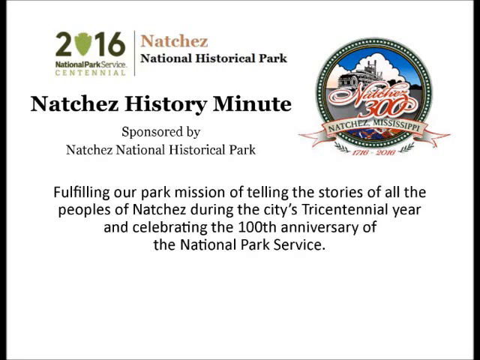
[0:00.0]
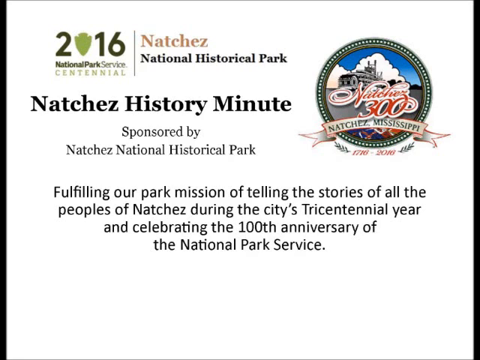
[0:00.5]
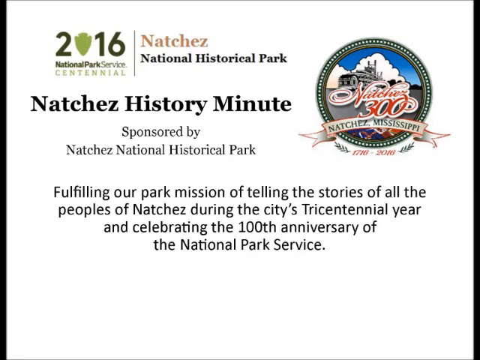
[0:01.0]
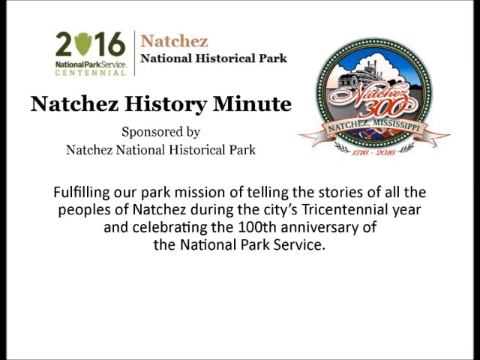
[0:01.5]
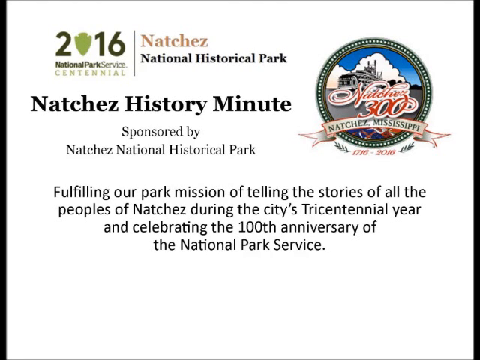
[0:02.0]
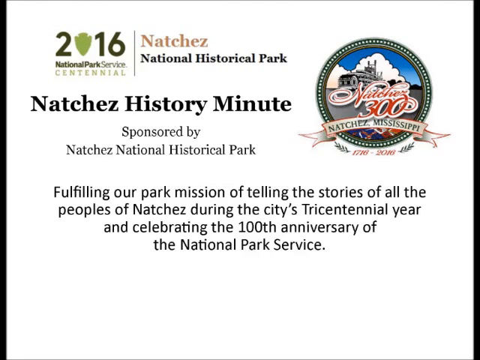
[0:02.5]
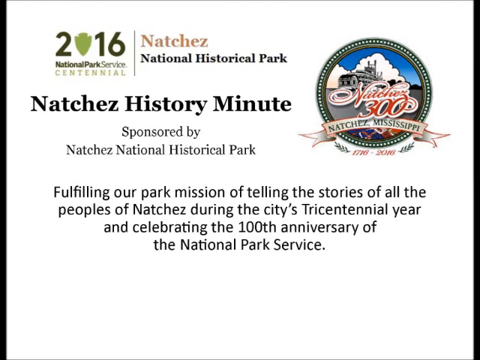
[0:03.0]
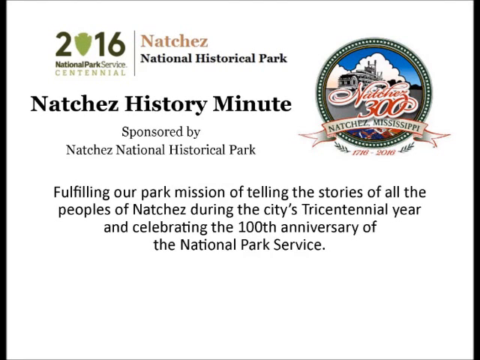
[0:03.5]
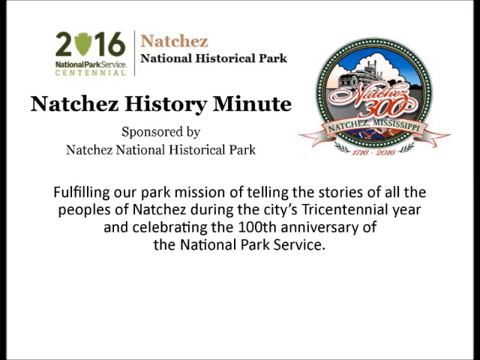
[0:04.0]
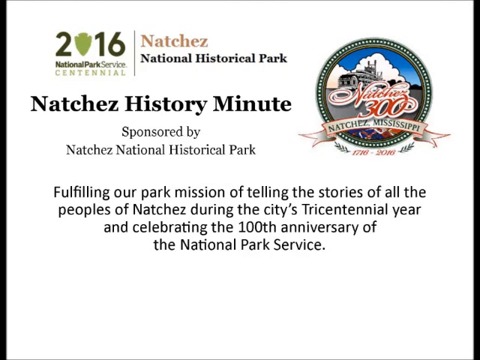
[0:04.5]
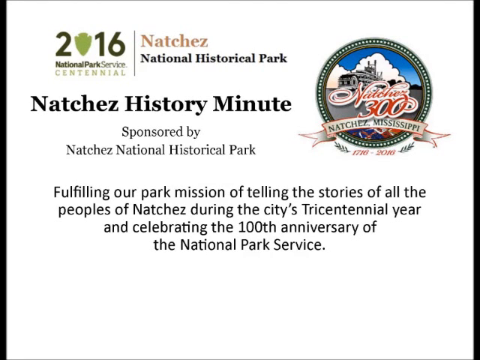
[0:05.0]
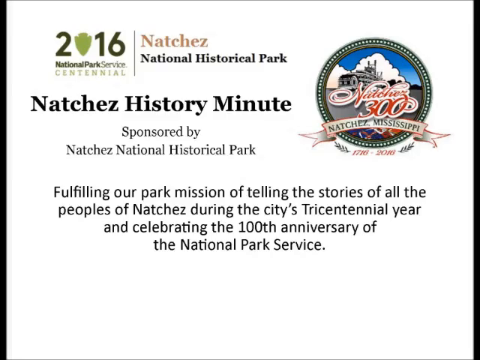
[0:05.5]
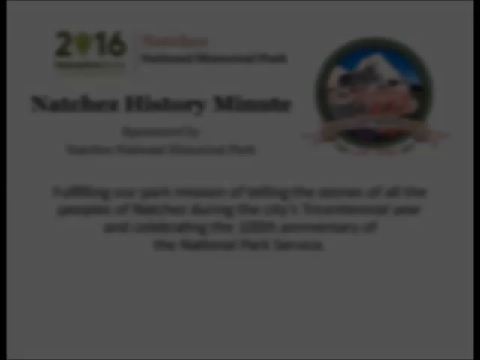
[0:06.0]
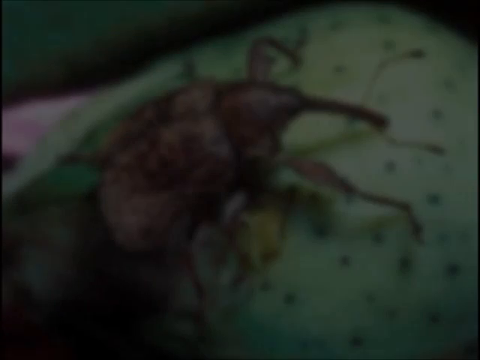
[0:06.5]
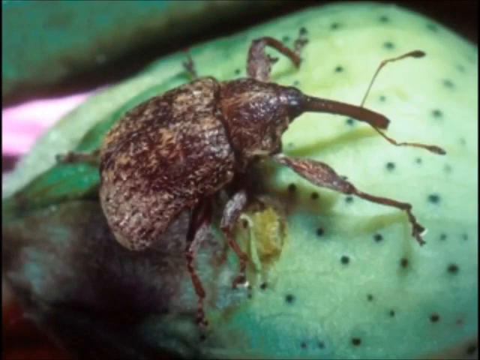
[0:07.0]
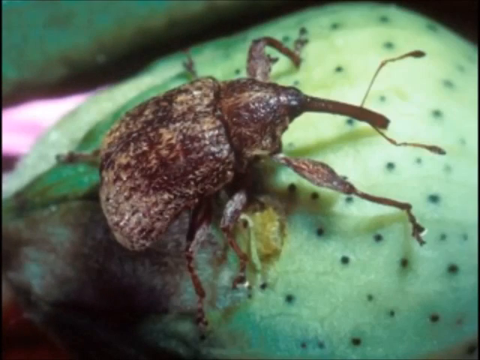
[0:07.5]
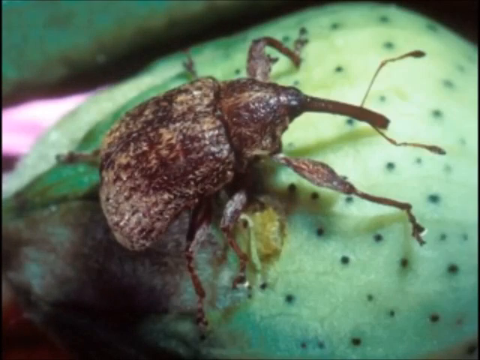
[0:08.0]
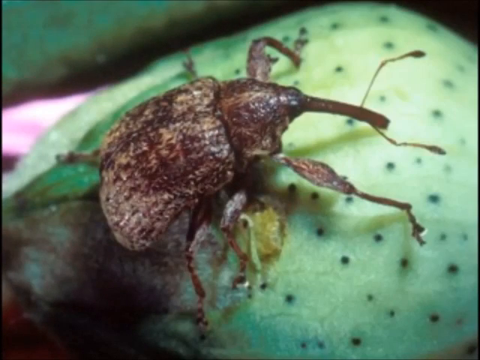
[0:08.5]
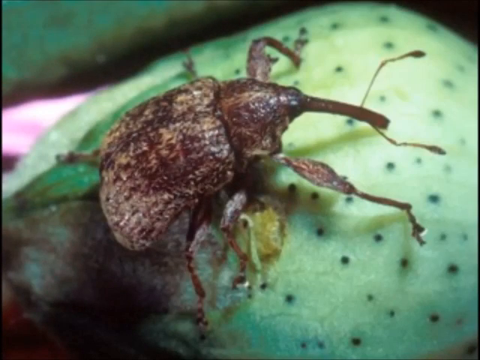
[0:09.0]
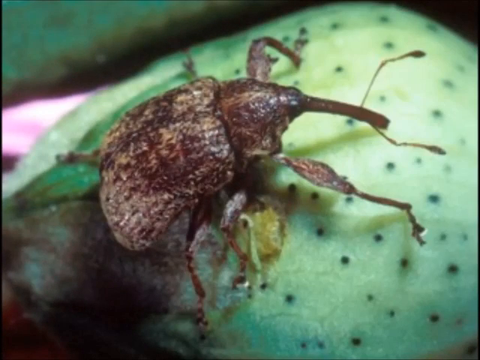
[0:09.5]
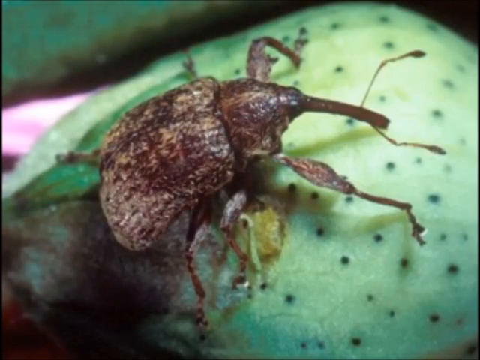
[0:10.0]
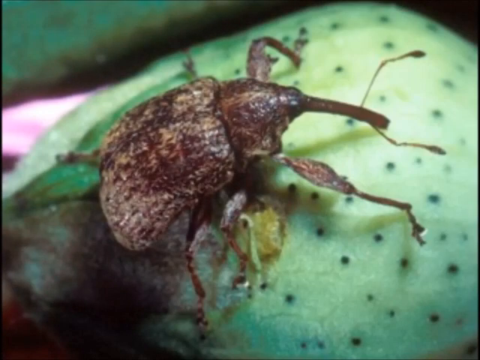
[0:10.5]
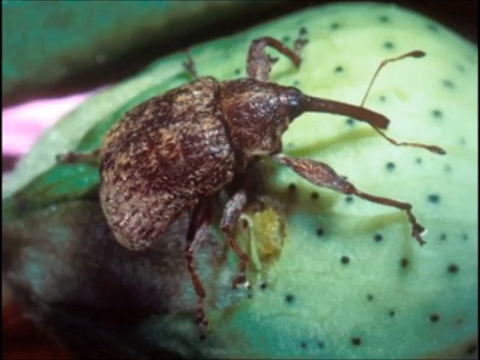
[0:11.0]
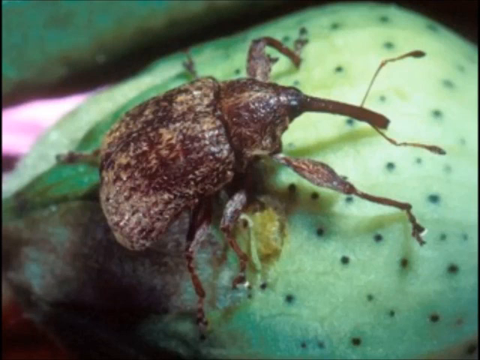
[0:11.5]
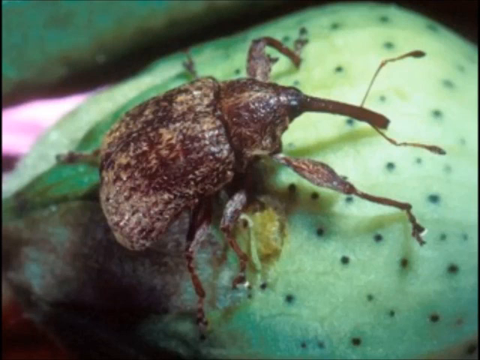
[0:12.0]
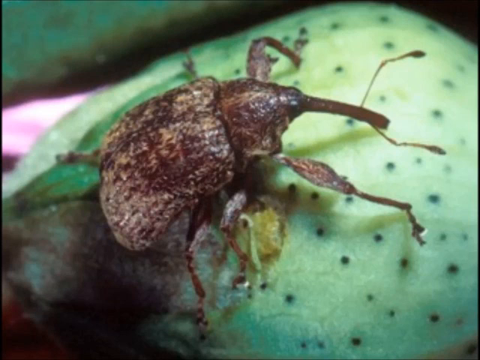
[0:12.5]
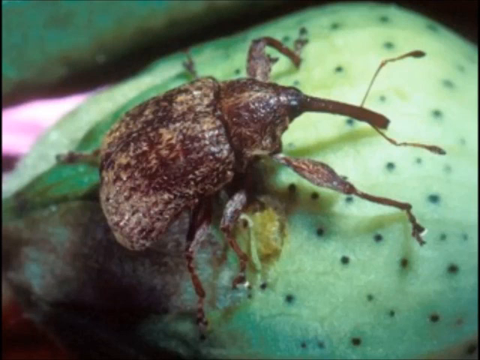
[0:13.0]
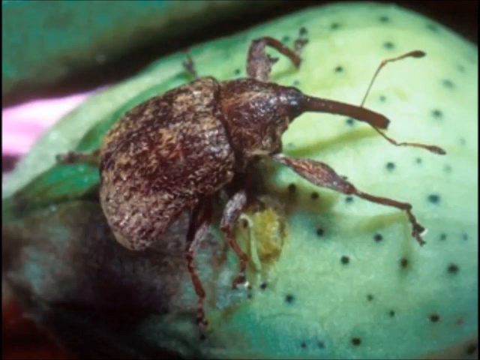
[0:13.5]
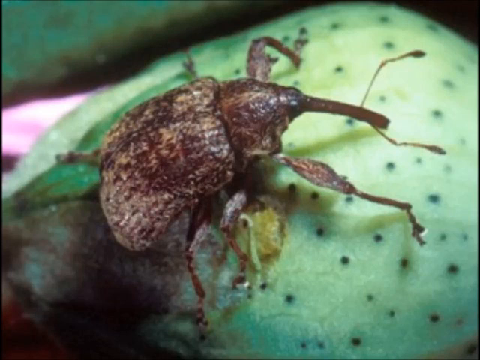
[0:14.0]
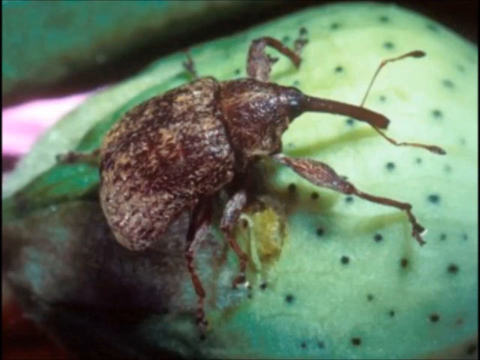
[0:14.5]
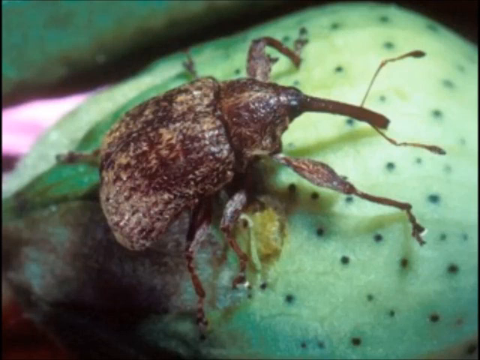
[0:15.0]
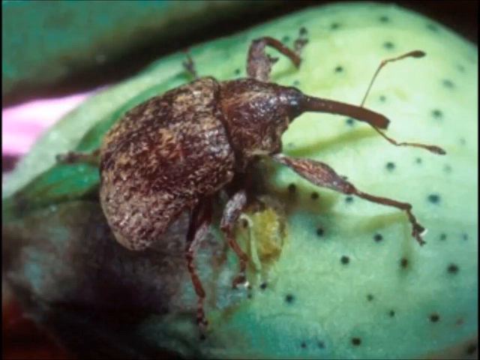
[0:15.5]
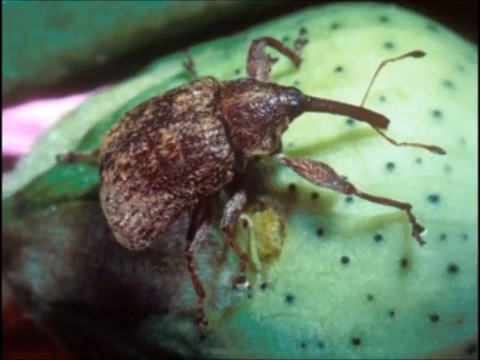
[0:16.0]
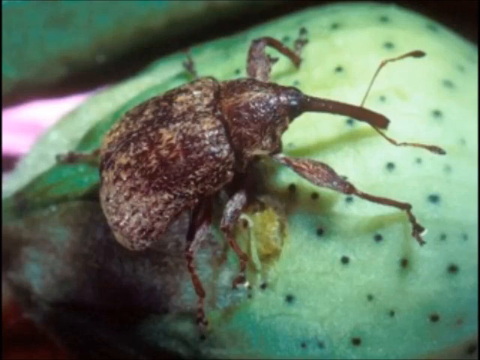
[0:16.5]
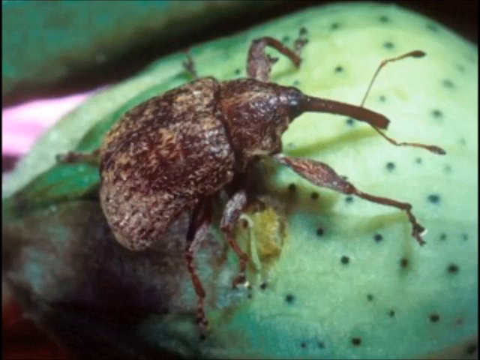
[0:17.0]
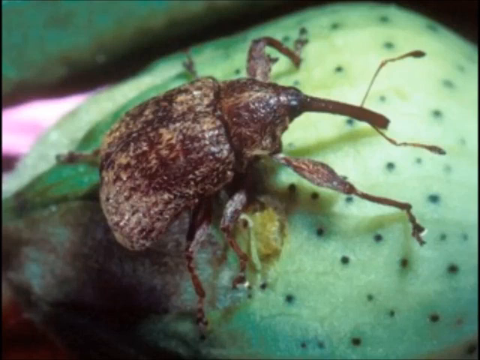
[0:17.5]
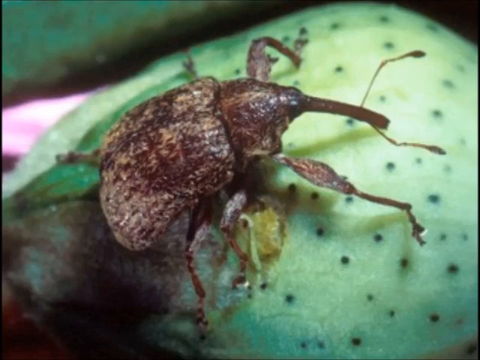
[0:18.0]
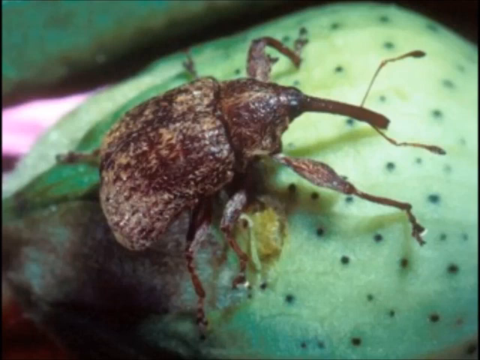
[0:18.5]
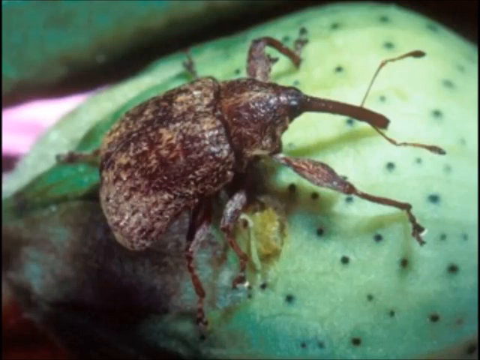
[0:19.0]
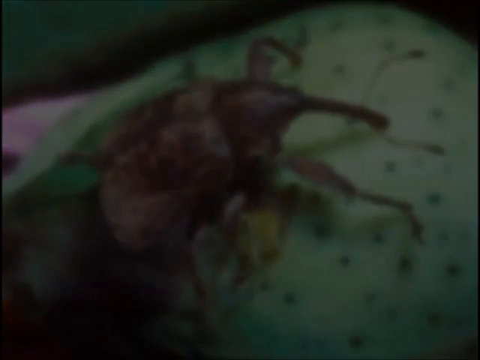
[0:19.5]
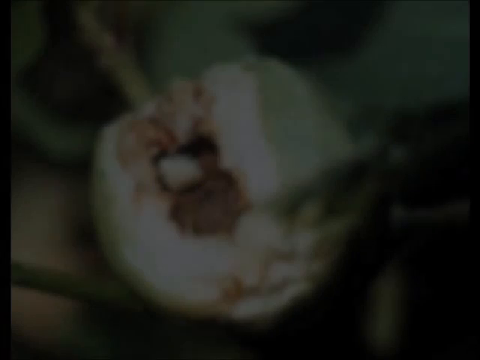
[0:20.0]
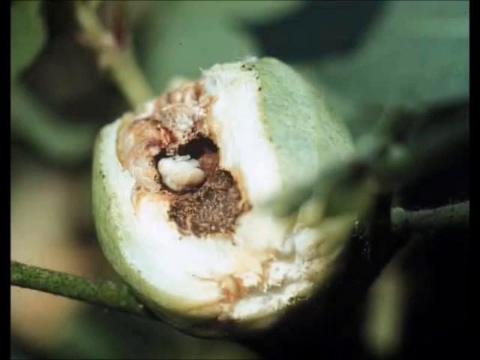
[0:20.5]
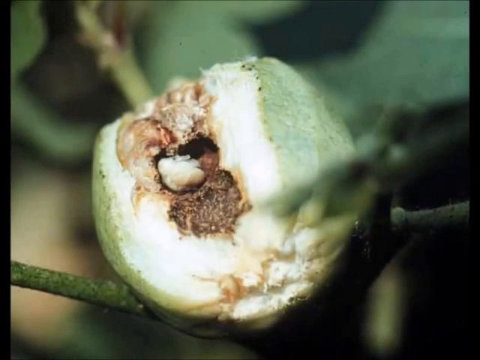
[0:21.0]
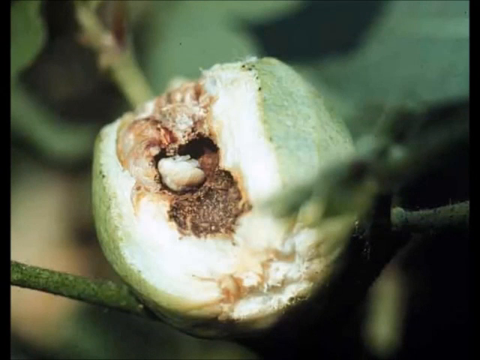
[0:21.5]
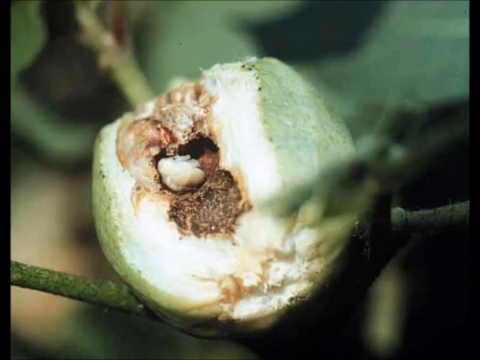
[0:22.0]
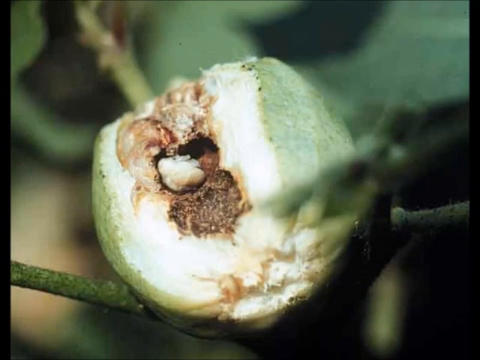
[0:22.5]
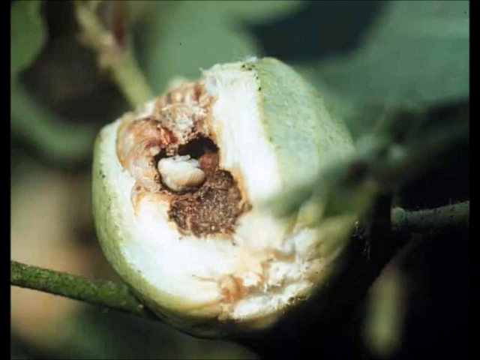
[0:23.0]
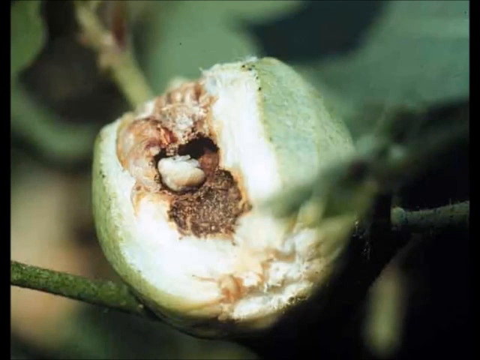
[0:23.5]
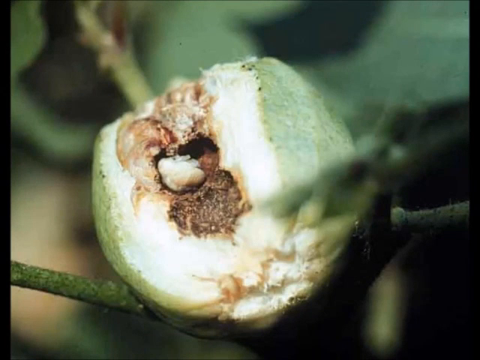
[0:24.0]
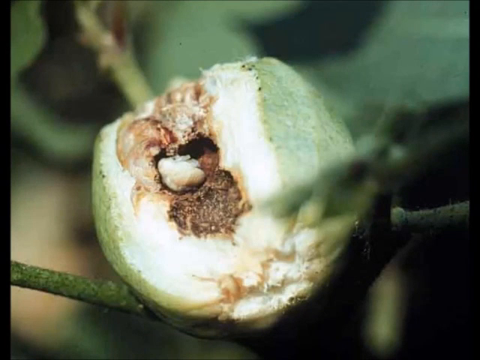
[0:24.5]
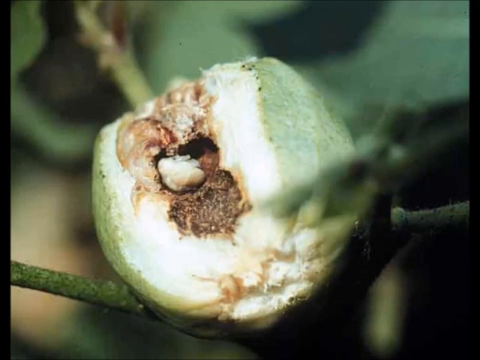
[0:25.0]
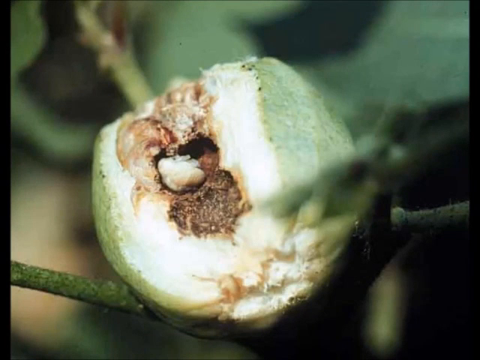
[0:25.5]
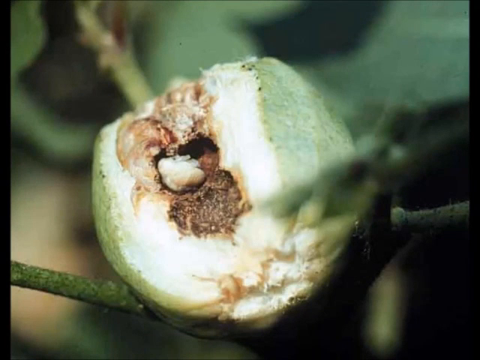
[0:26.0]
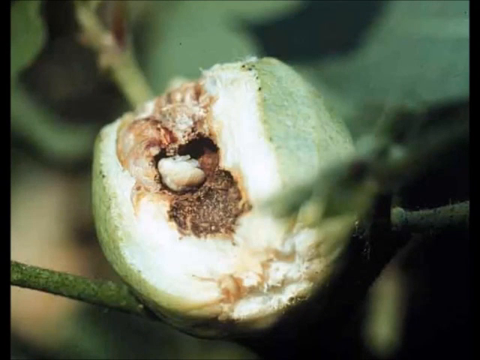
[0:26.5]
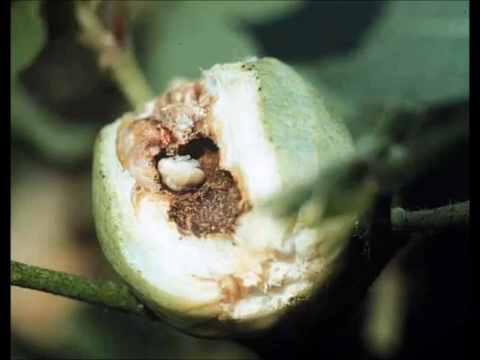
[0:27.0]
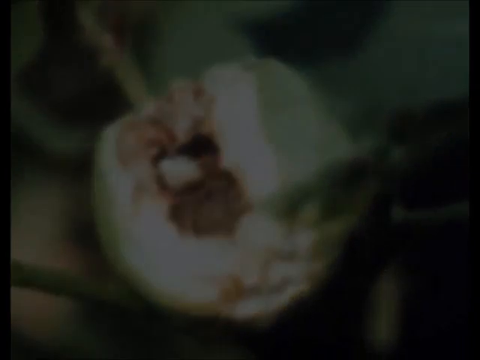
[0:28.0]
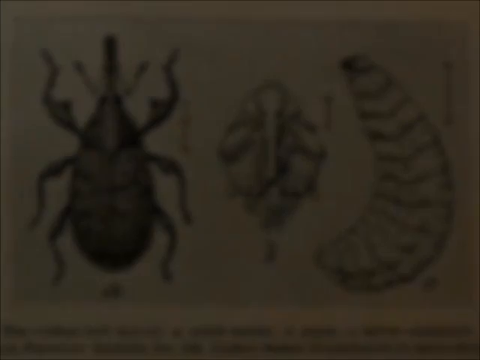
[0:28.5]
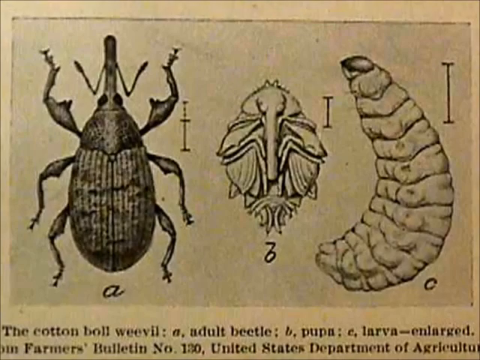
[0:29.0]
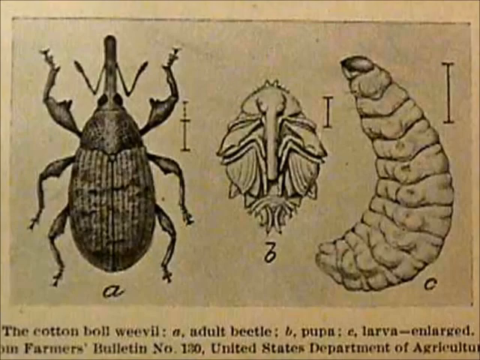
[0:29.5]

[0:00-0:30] The video opens on an all-white background. In the top left is "2016" in green, with the zero shaped like an upside-down arrowhead. Underneath it, in smaller lettering, is "National Park Service Centennial." To the right is "Natchez," with "National Historical Park" underneath. On the right side is a circle with a green border, little white dots and another green border; inside it are a blue sky with clouds, a steamboat and water. Across the center it says "Natchez 300," with "Natchez, Mississippi" below that and "1716-2016" below that. Information runs down the left side, and a full paragraph of information is at the bottom. The video then cuts to a close-up of a big brown bug that looks like a beetle. Its arms reach down to the bottom left and bottom right, and its head faces up and slightly to the right. It is on a green plant with dark green dots. A long, slender nose comes off it, with two antennae off the sides of the nose, one going up right and one going down right. It has three legs on the bottom and three on the top, six legs in total. Next comes a green veggie that is busted open, followed by a diagram of a bug.